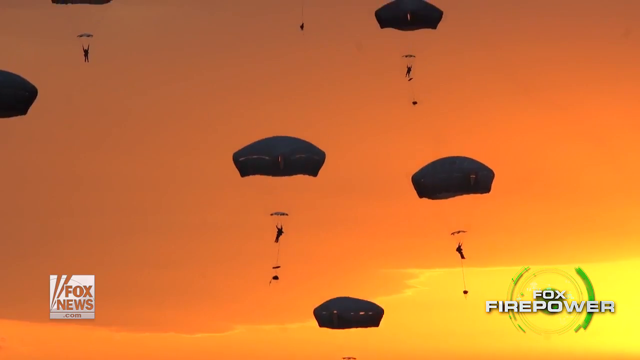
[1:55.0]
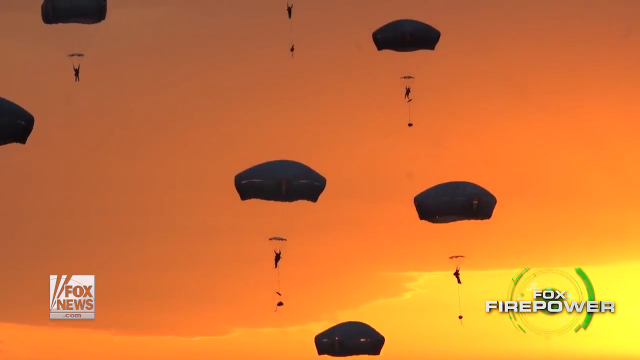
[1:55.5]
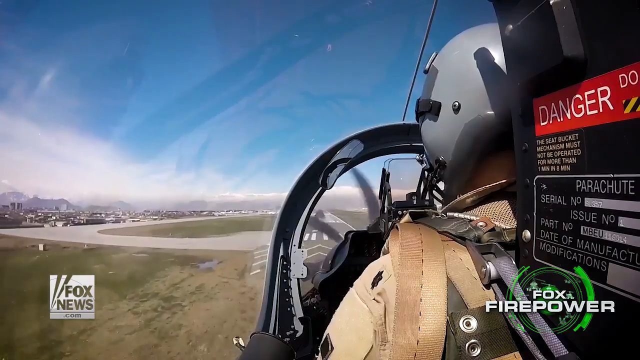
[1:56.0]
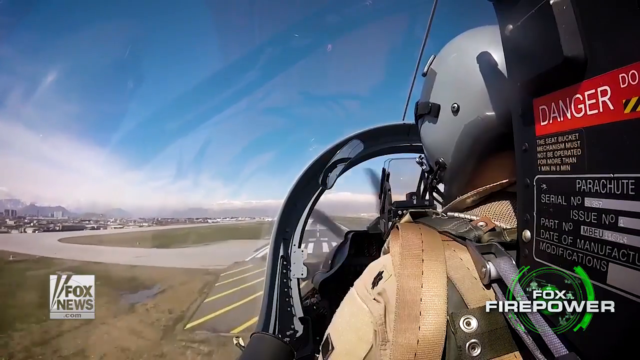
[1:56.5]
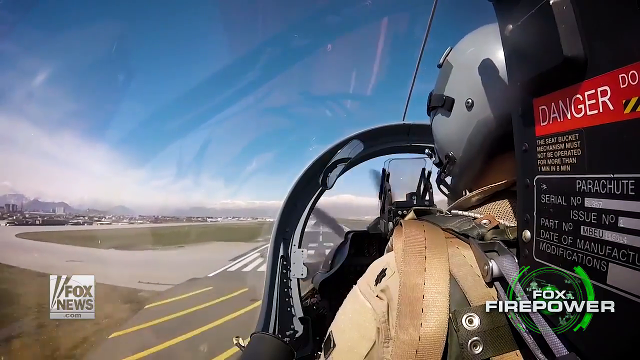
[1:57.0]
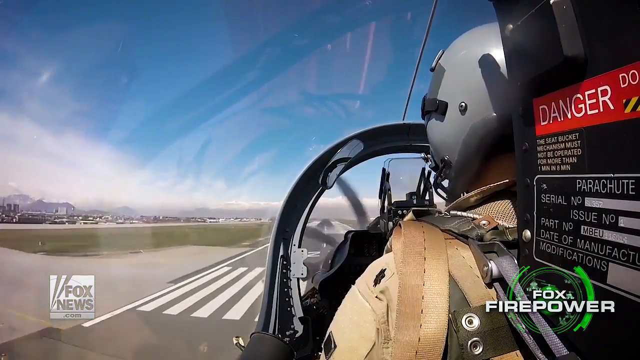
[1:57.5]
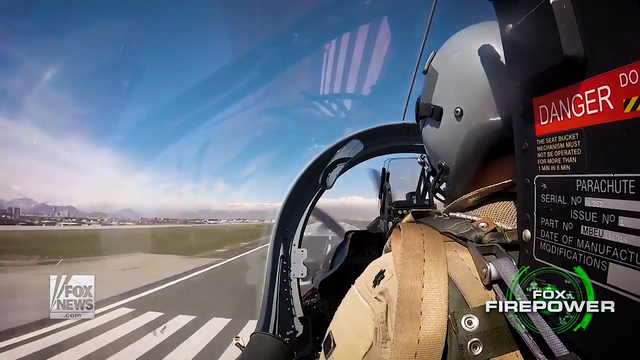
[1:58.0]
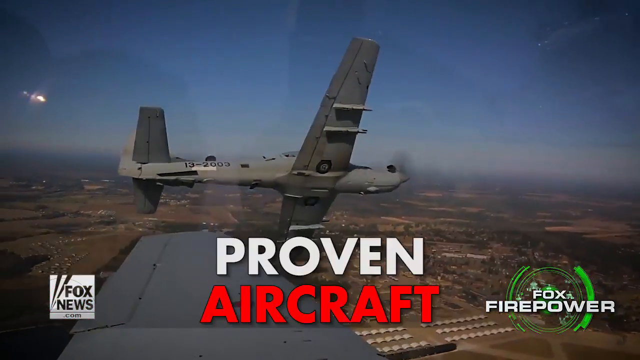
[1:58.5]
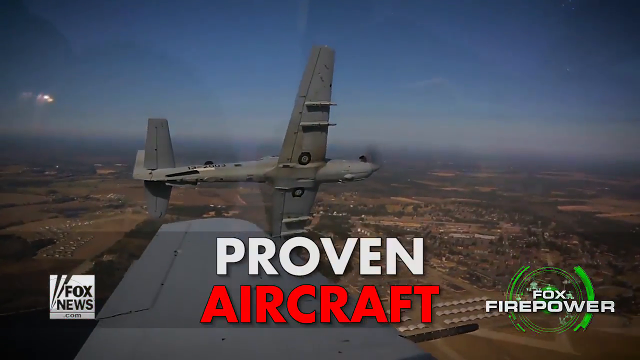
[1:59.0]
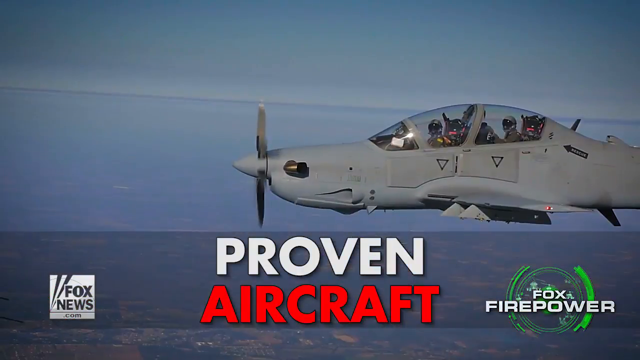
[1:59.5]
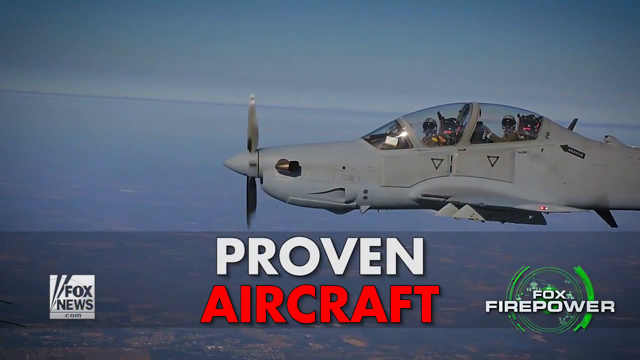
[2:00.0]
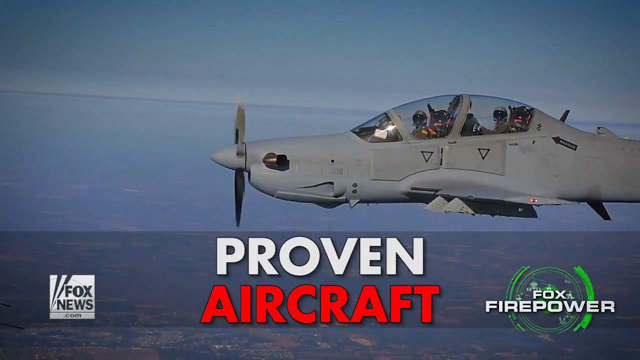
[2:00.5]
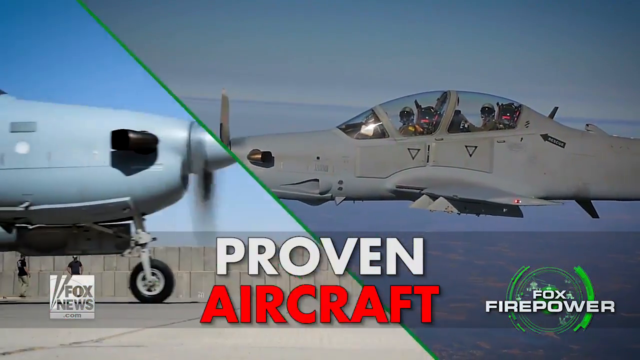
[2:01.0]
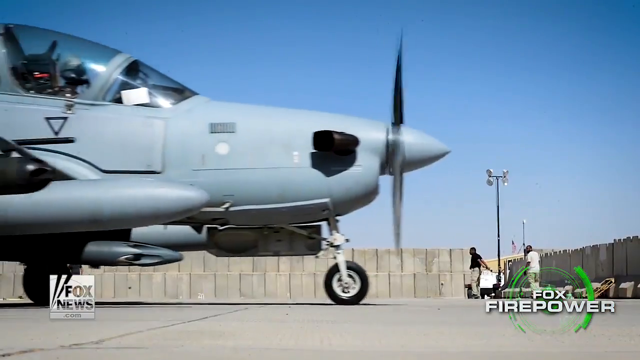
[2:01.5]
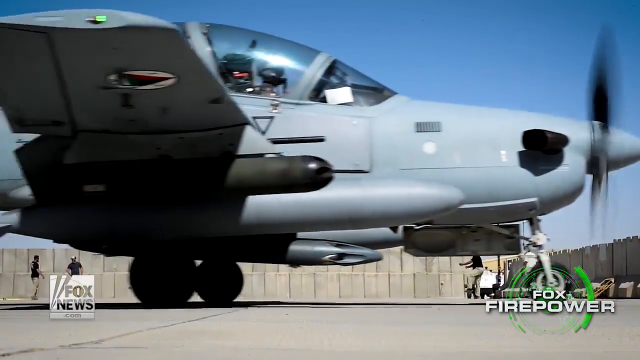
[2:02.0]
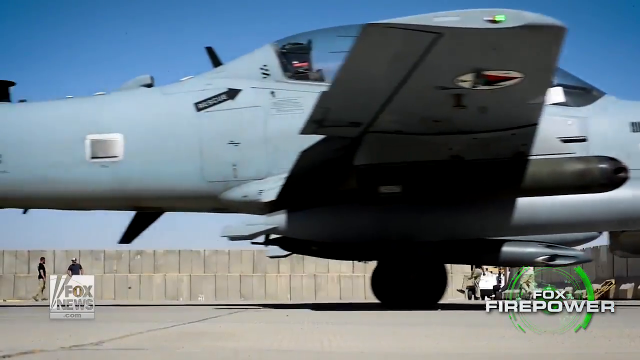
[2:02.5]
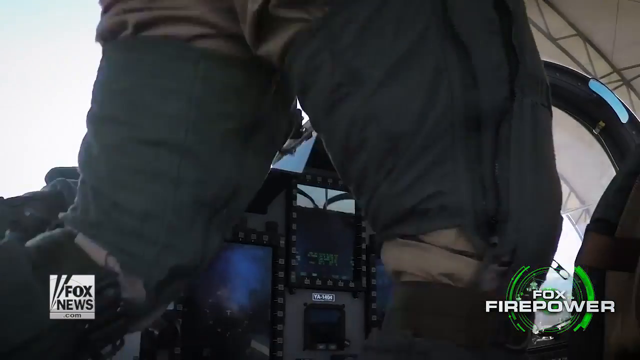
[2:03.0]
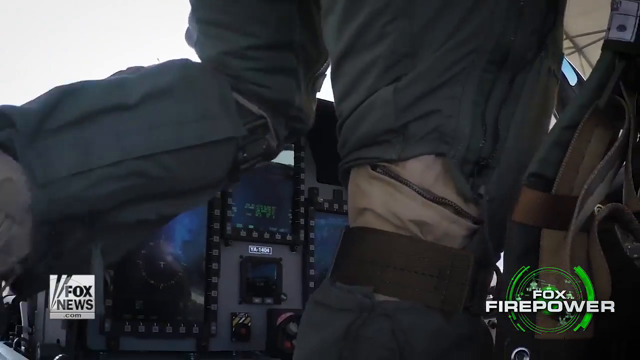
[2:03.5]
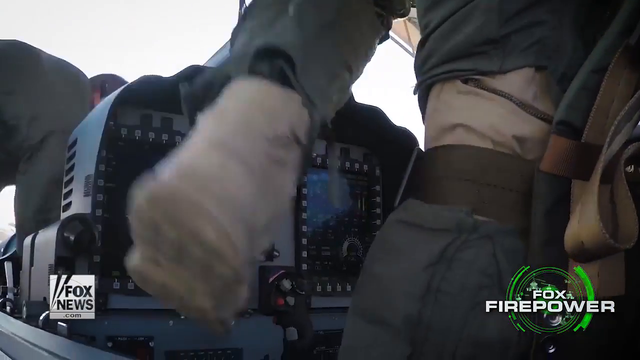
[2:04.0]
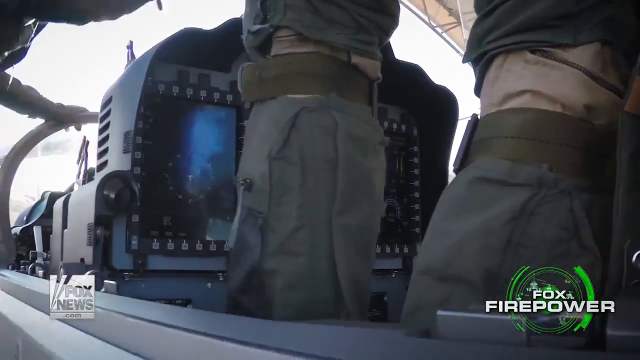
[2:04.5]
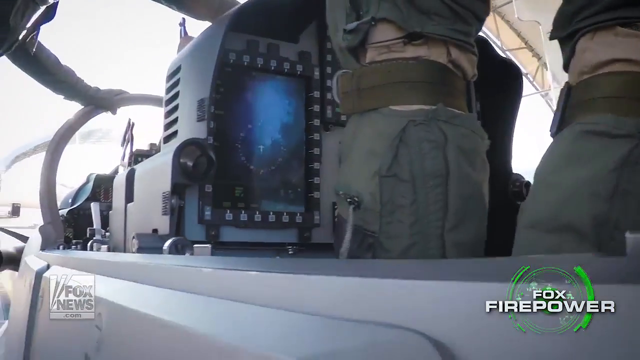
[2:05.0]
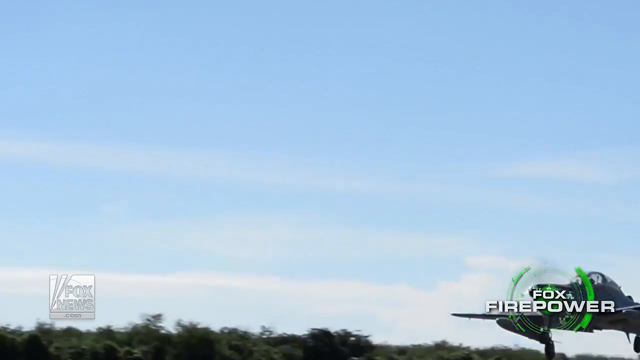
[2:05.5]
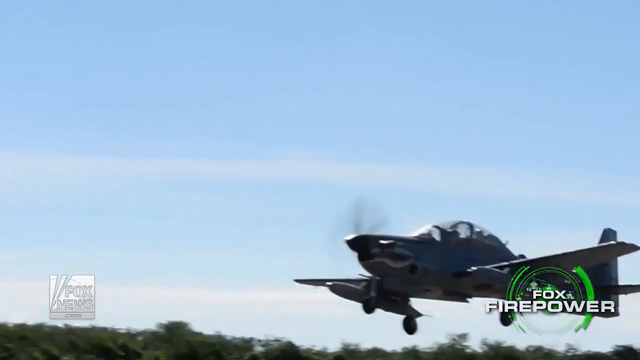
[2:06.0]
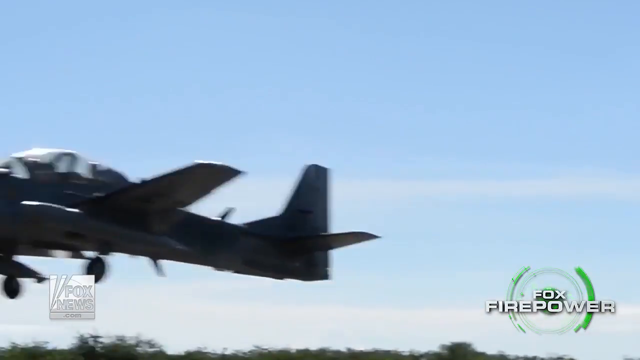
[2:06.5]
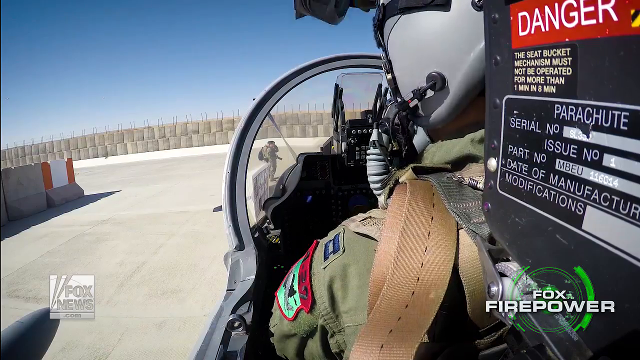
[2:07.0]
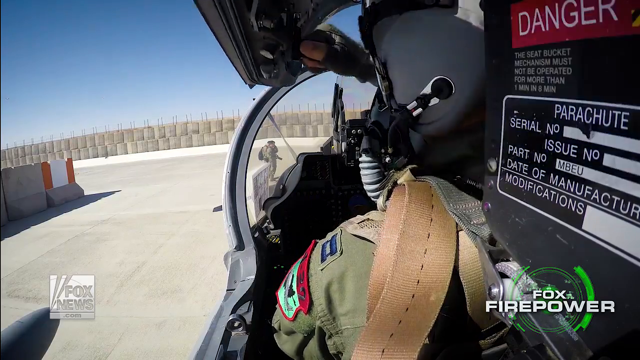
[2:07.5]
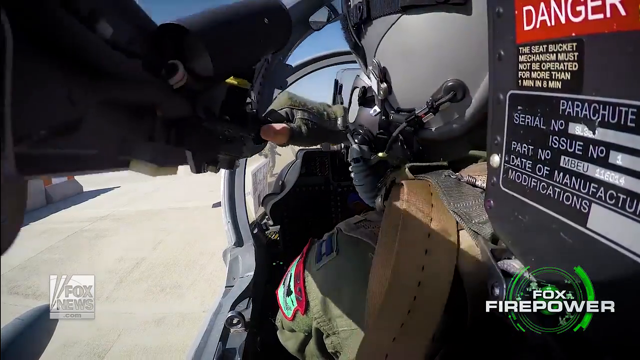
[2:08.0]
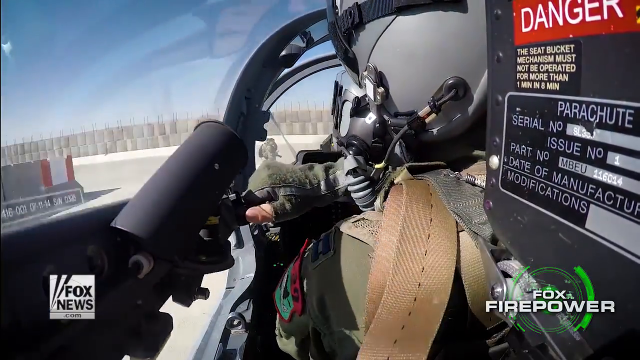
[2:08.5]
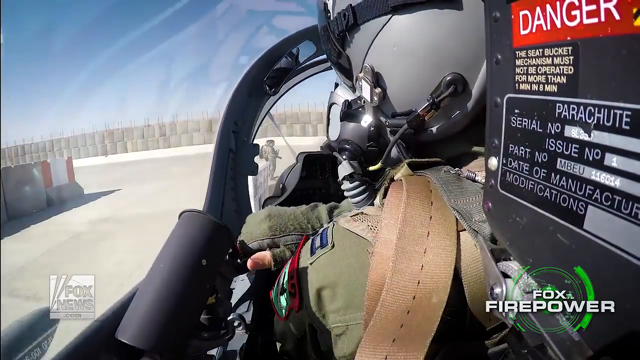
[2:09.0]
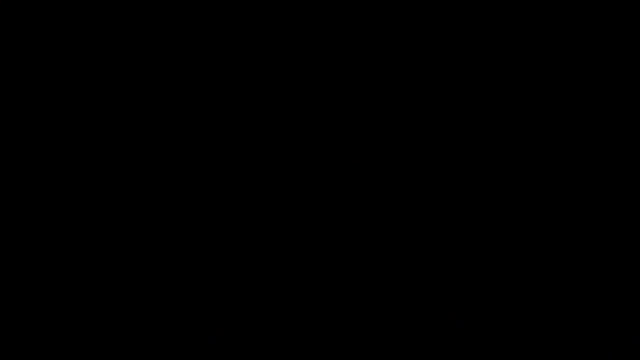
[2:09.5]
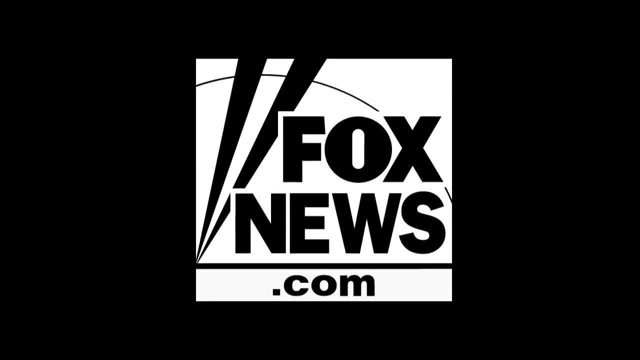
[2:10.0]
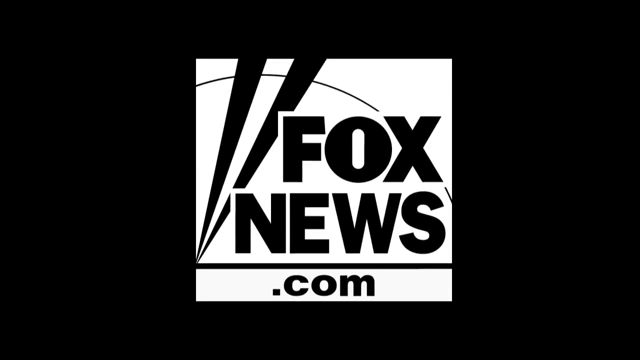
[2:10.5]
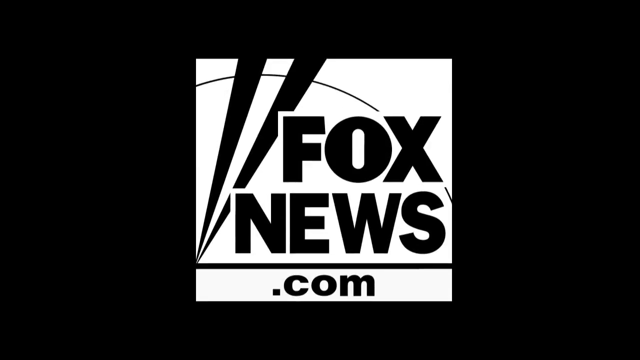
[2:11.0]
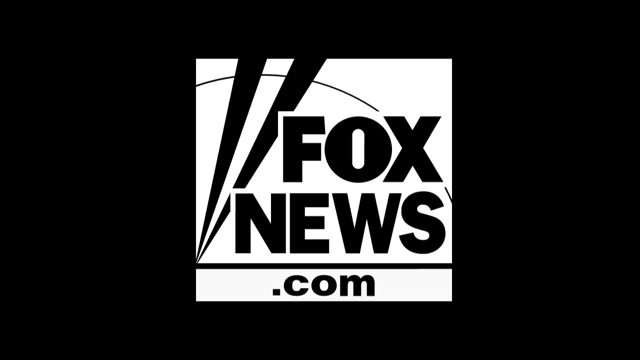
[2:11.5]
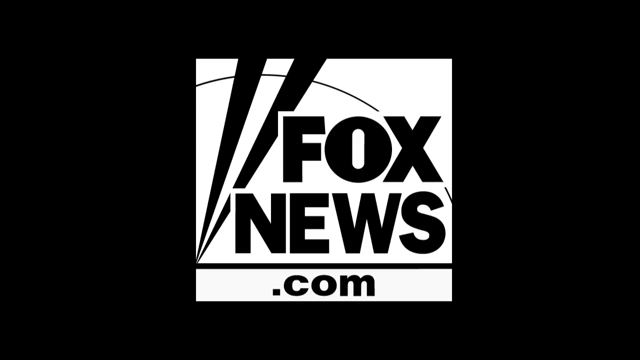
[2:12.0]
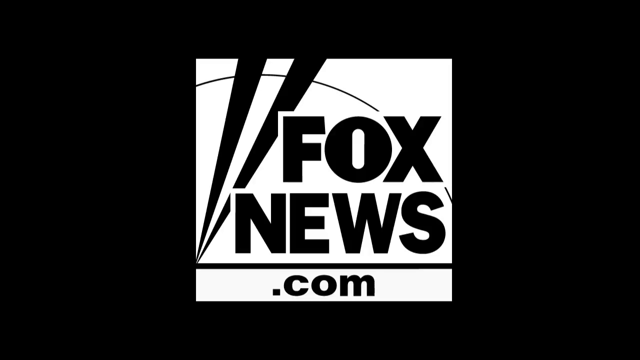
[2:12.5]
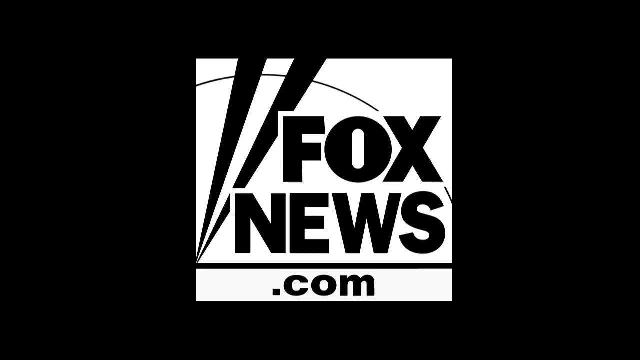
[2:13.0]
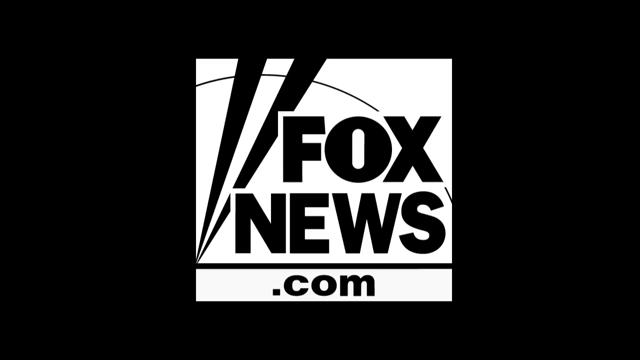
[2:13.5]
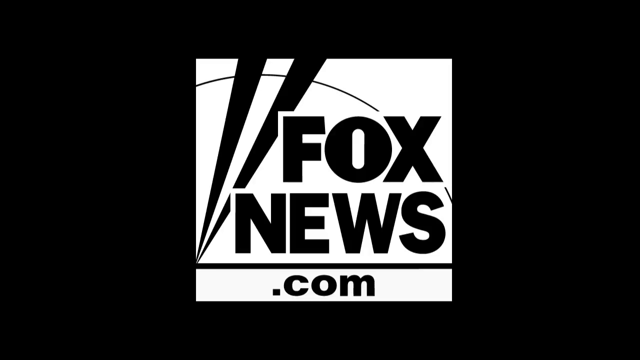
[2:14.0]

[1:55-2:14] A couple of soldiers land with parachutes. The text "Fox in firepower" appears, along with "proven aircrafts". A pilot lands, gets down from the aircraft and settles. While one aircraft lands, other aircraft are still landing, and they land gently. Other people help around, with engineers fixing things. The runway is very clear, with no obstruction. At the end, "foxnews.com" appears on screen.